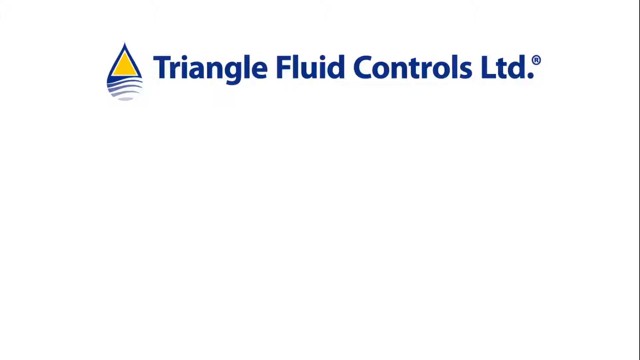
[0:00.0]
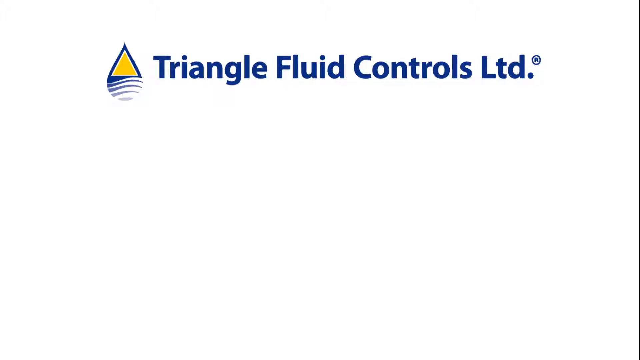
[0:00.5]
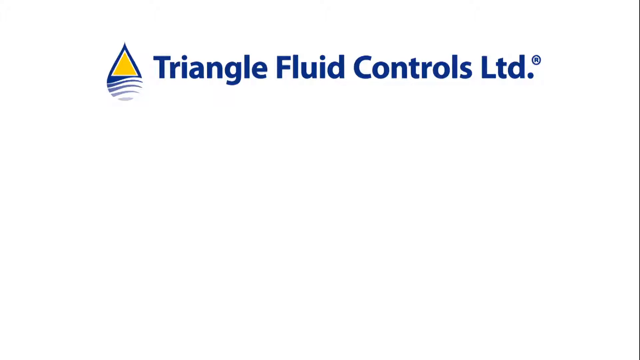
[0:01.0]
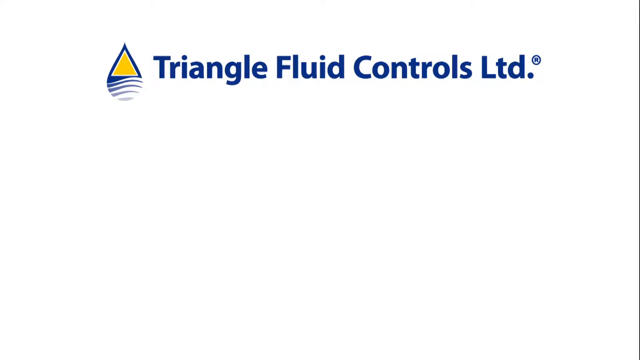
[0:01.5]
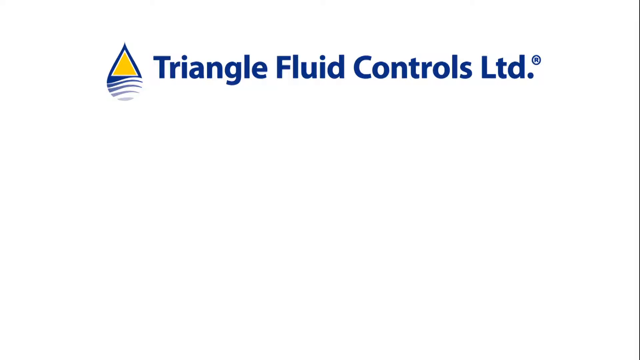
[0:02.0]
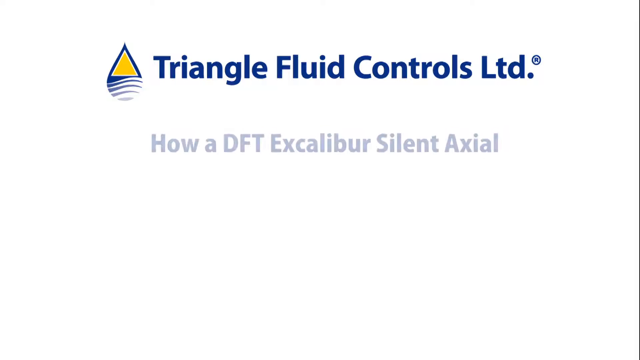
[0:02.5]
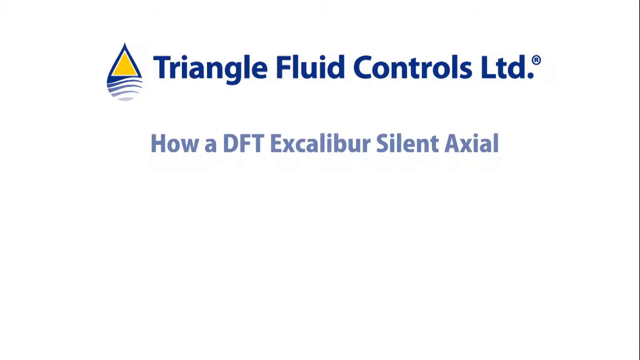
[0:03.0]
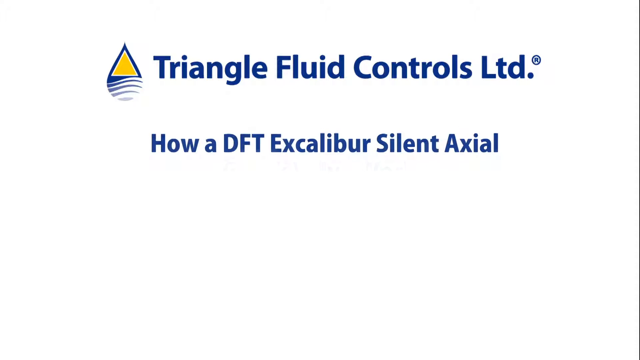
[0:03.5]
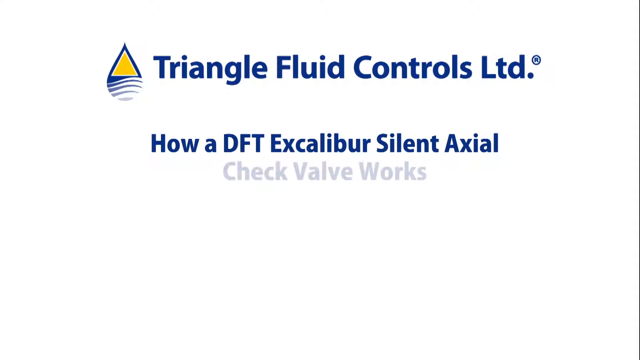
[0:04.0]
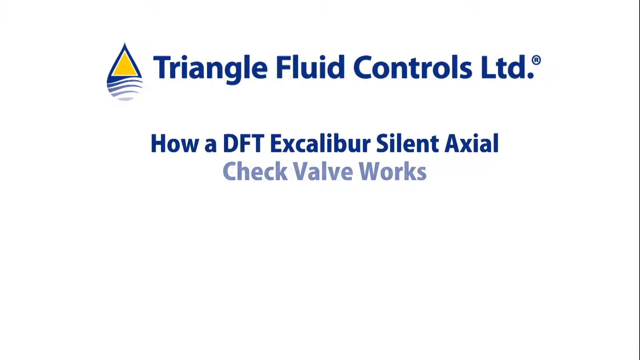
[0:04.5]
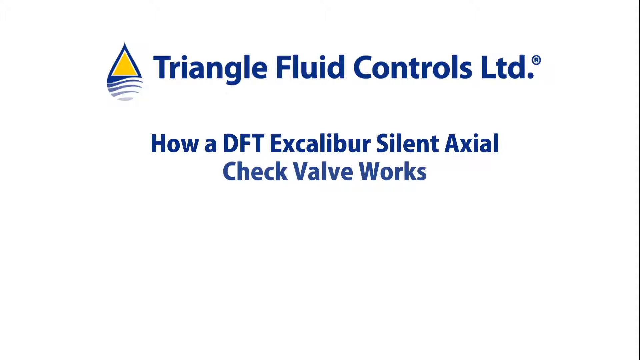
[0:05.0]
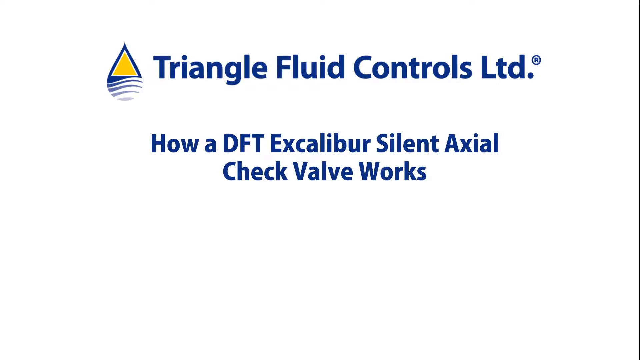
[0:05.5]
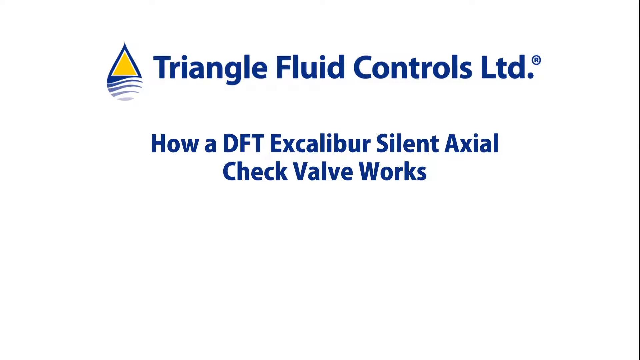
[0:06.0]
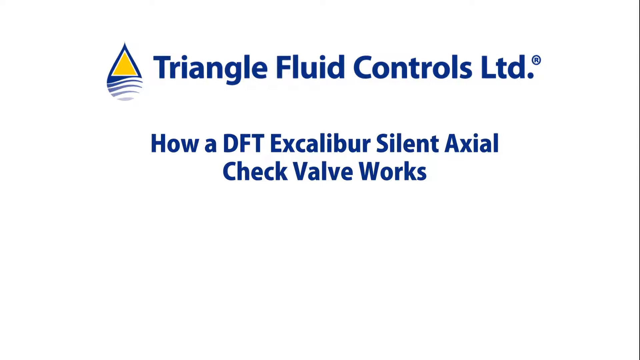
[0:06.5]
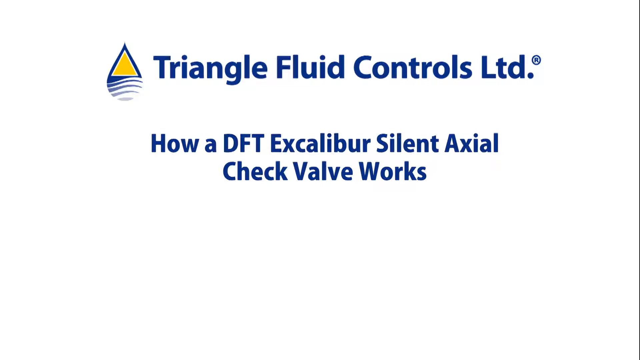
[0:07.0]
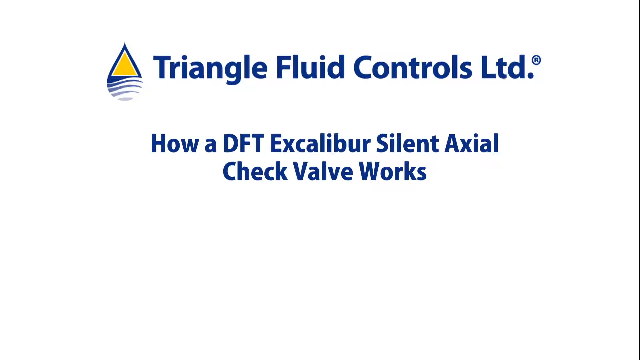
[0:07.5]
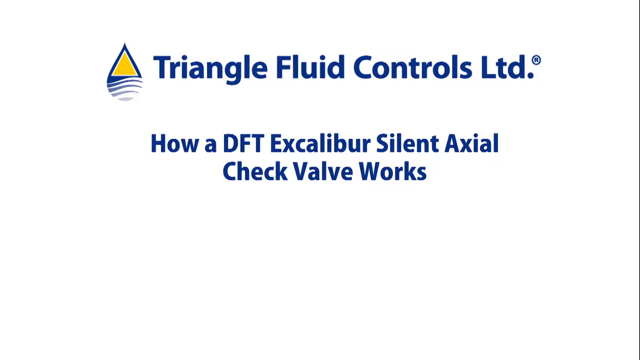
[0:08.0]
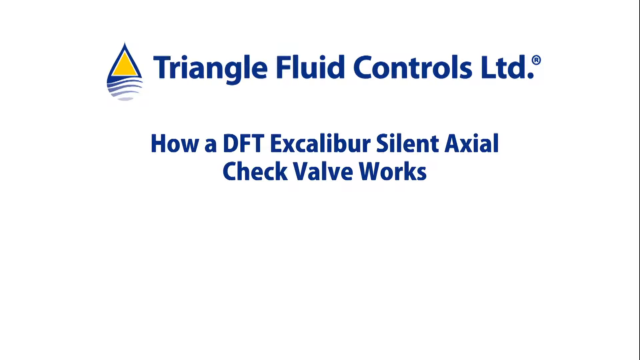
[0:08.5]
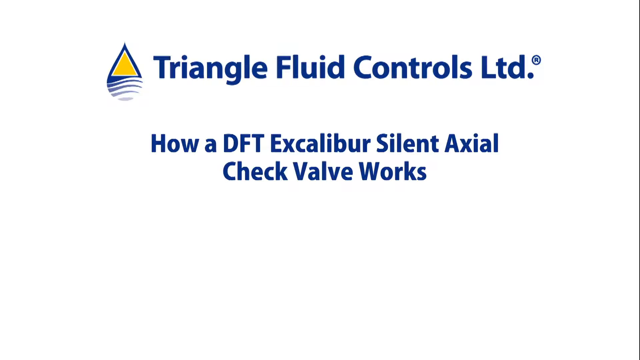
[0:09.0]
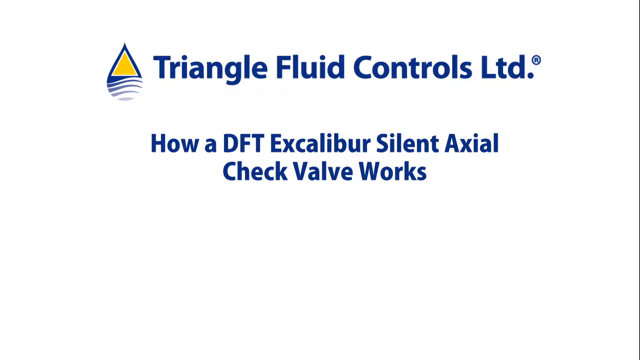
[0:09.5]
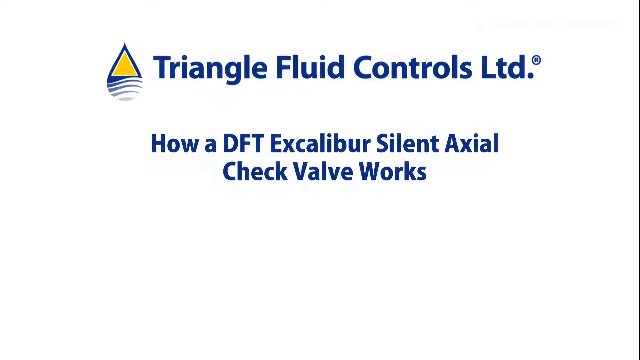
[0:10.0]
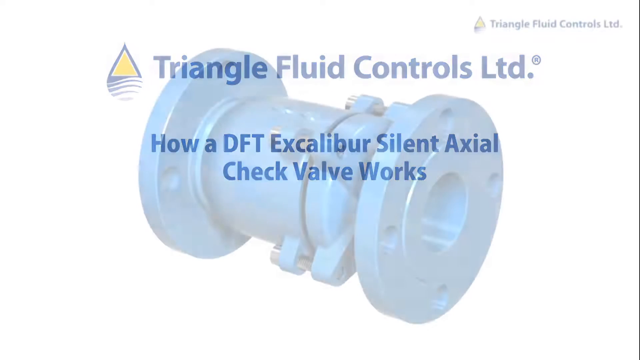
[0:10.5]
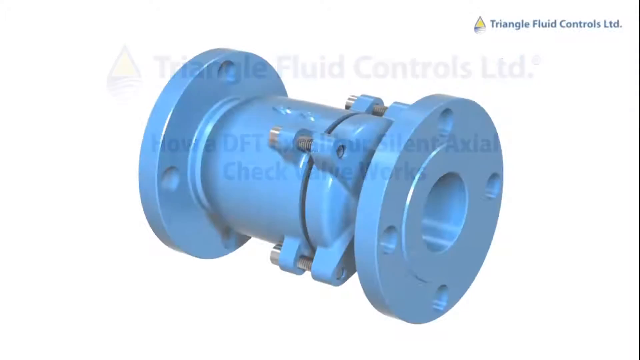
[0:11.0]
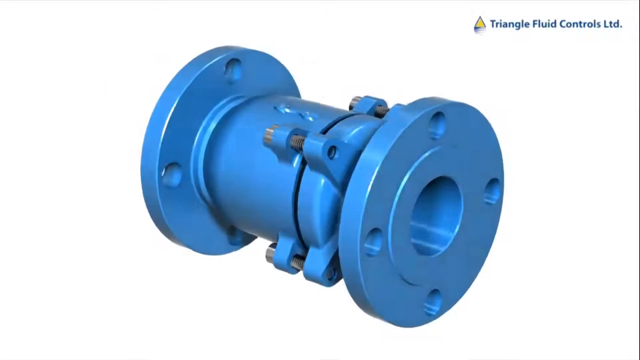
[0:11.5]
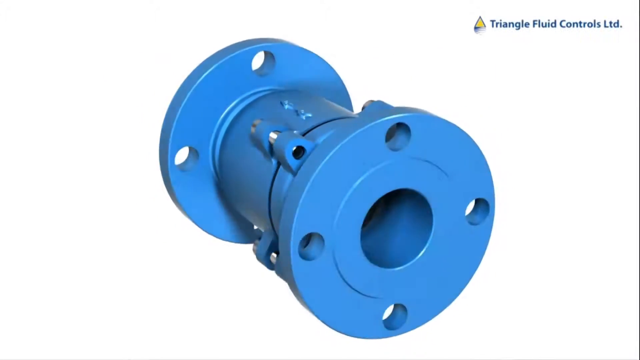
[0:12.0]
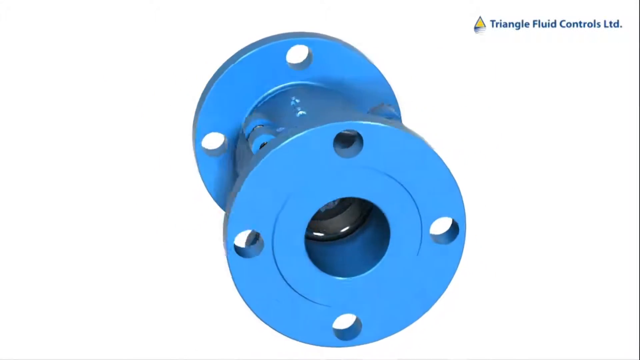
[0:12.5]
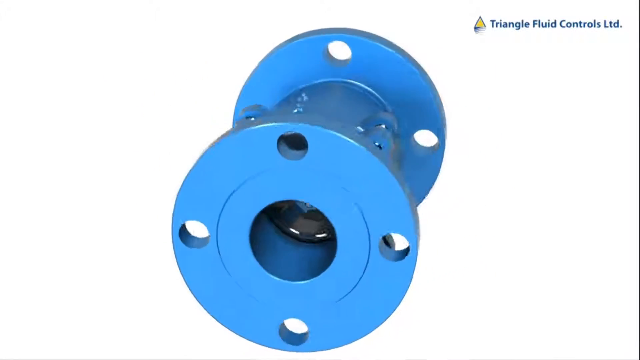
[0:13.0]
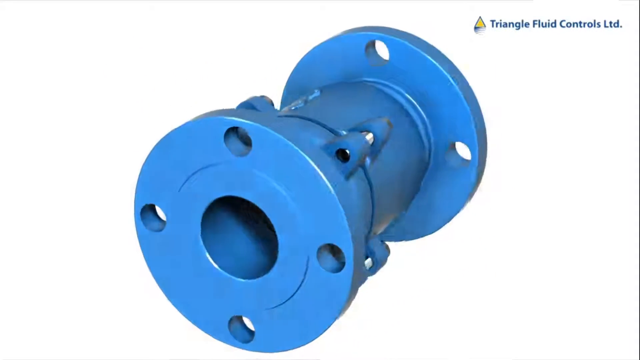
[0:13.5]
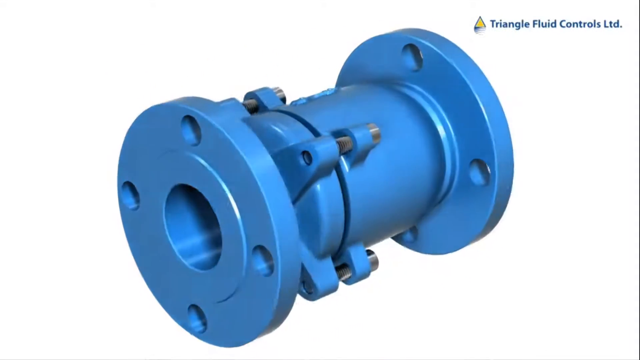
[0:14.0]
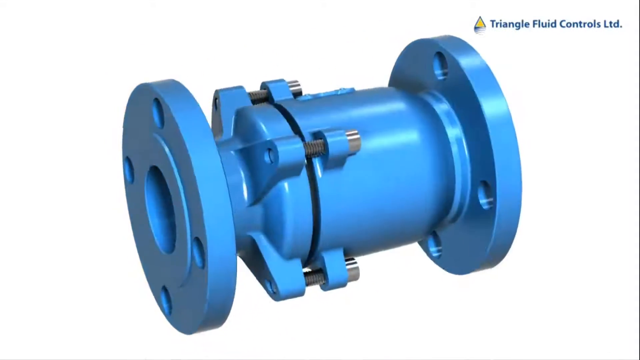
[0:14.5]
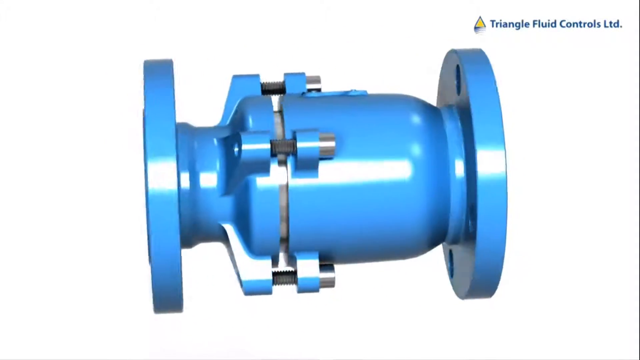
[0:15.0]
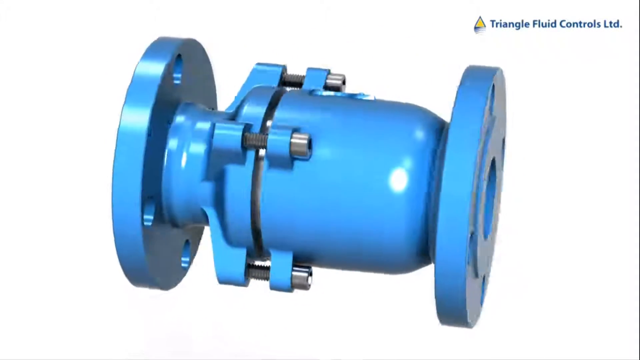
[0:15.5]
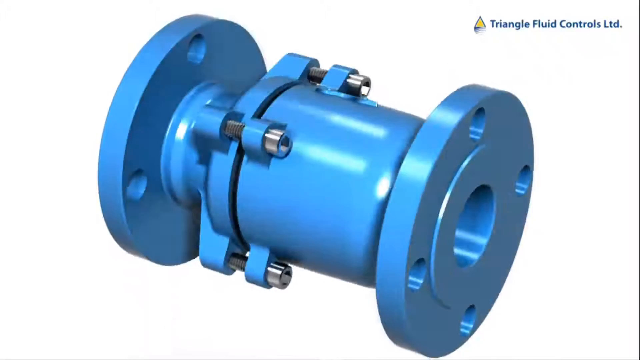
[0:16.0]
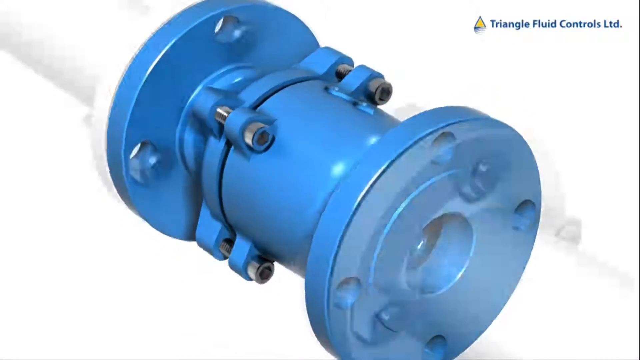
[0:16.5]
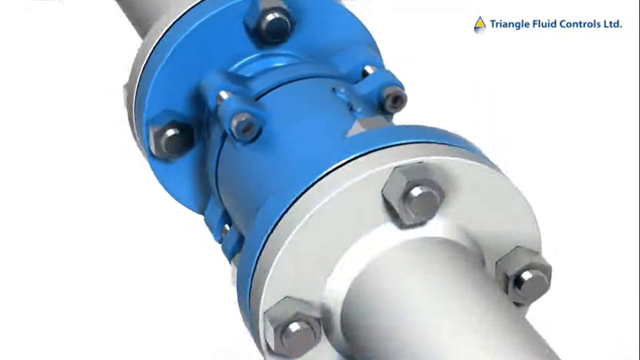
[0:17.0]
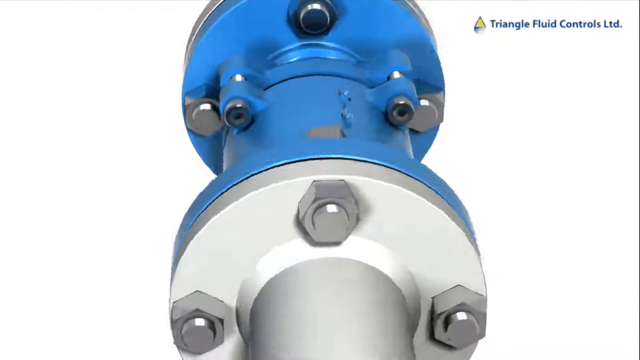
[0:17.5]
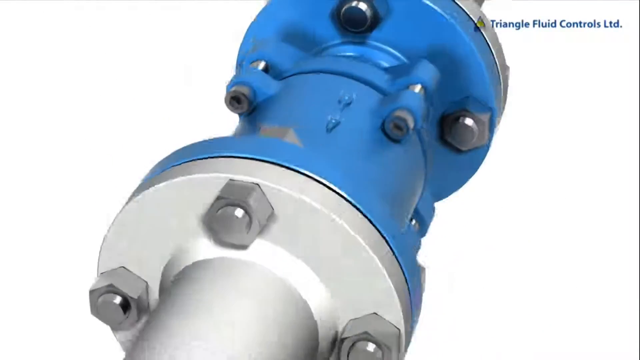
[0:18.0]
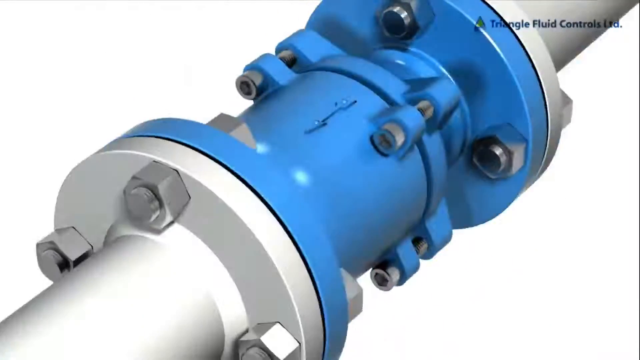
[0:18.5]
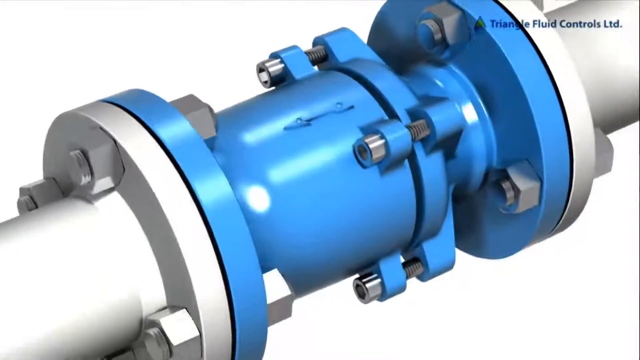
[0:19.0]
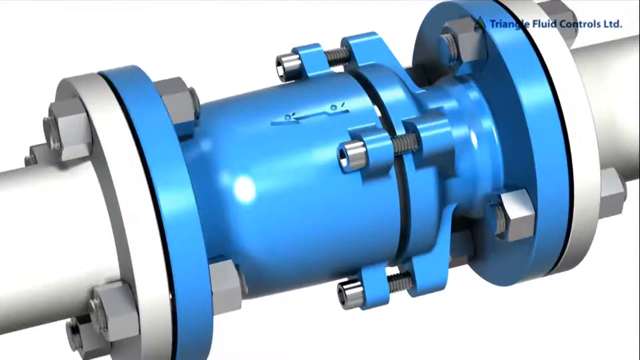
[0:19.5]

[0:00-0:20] The video is about how a DFT Excalibur silent axial check valve works. A blue check valve with many screw bolts tightened on it is connected to a greyish pipe on each side. The valve is separated into three parts: there is a head and, apparently, a tail, each pointing out at either end. The valve has many holes where the screw bolts tighten and hold it, and two big holes on the head and the tail where it connects to the pipe. In the middle it is divided into two parts, which are connected by four screw bolts that look like a gear, tightened to hold it together.